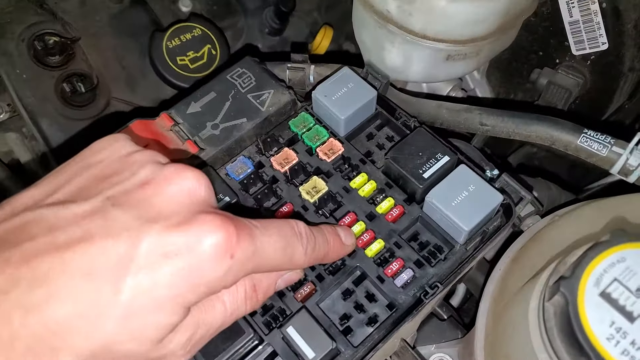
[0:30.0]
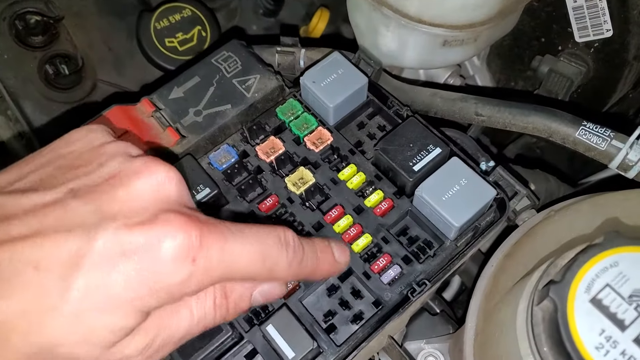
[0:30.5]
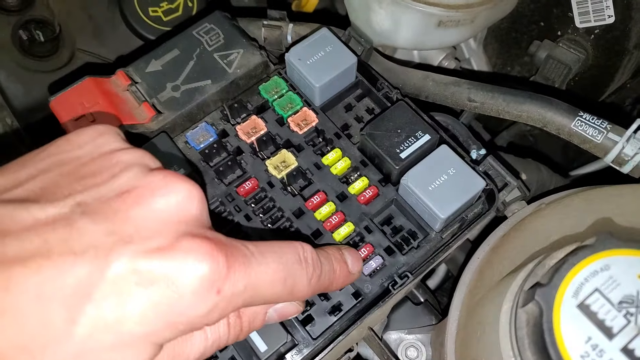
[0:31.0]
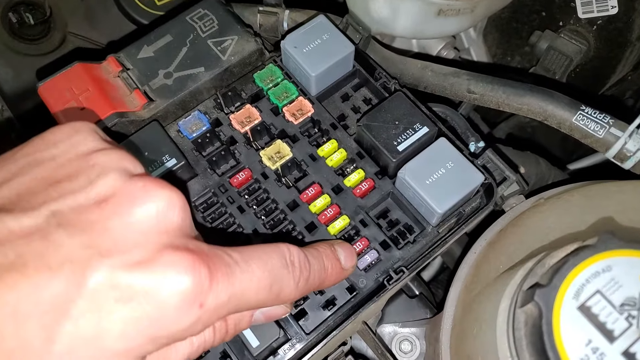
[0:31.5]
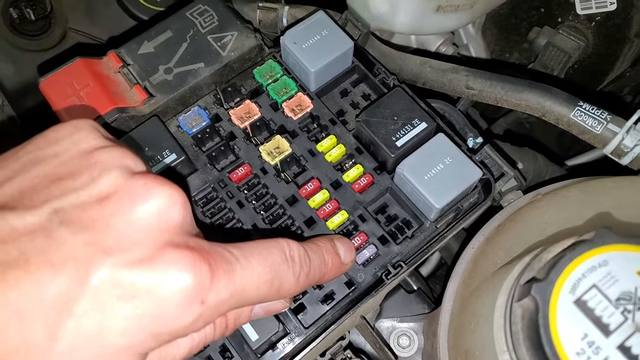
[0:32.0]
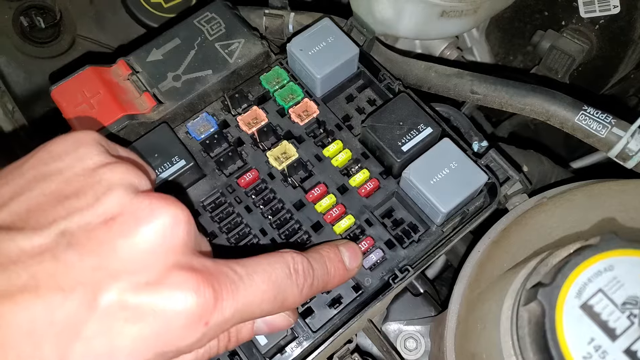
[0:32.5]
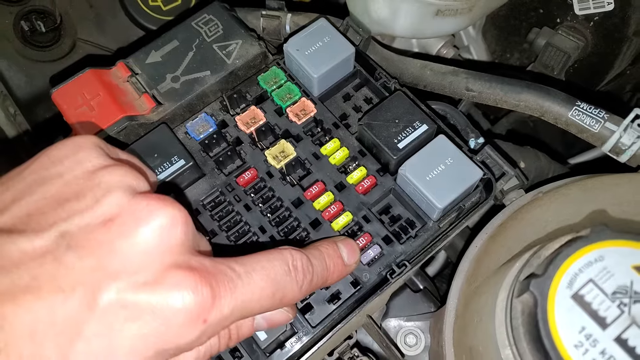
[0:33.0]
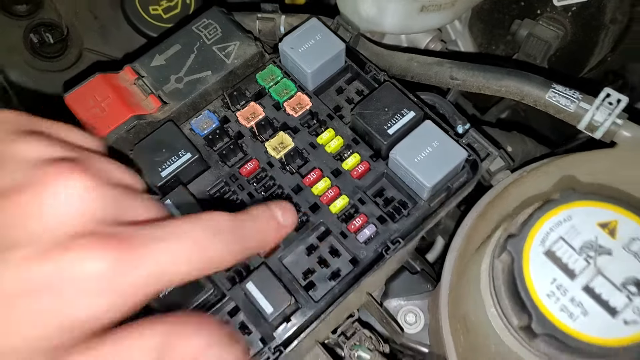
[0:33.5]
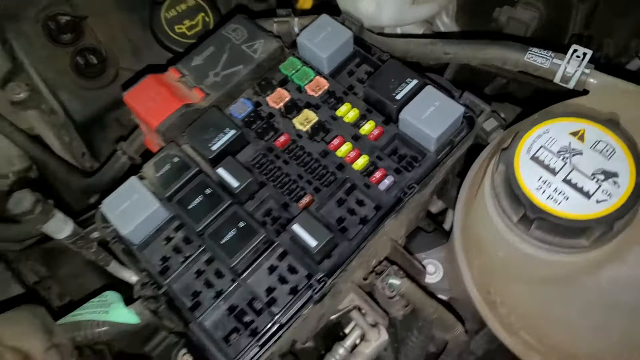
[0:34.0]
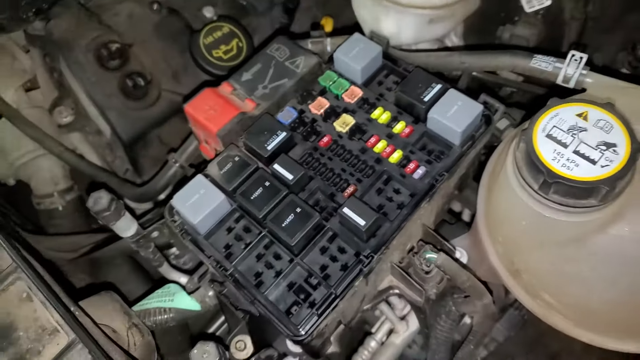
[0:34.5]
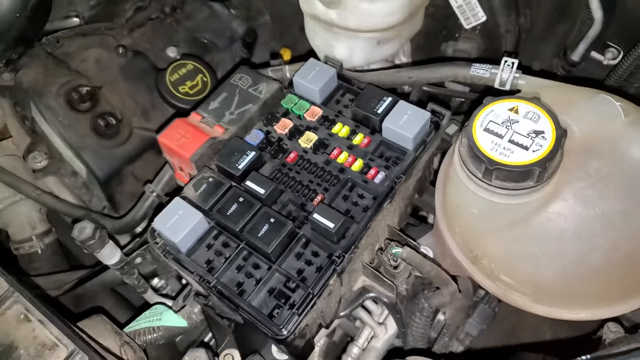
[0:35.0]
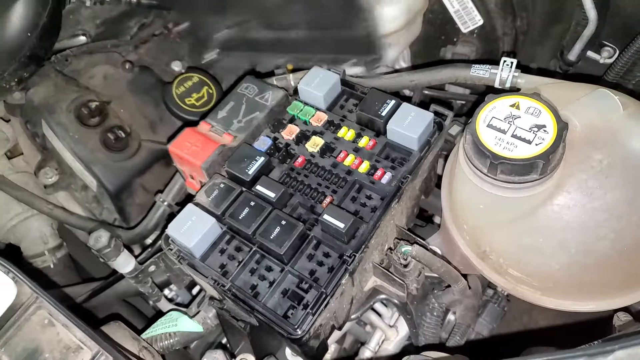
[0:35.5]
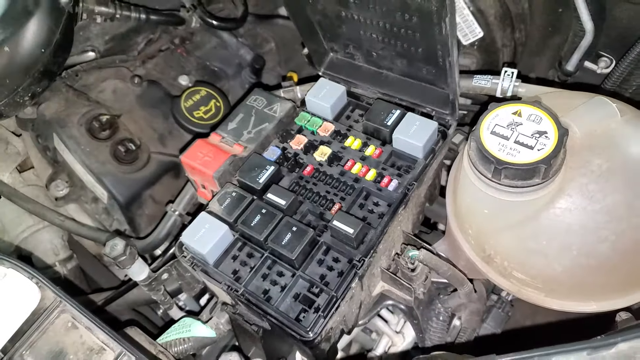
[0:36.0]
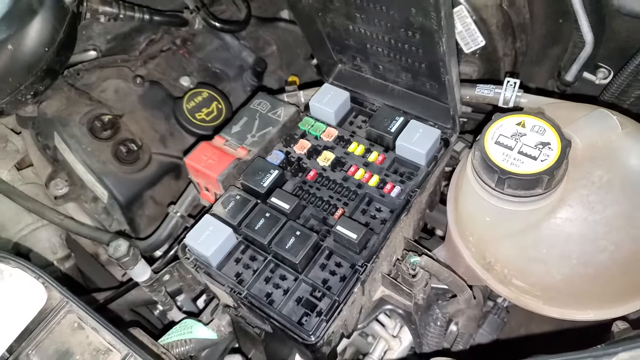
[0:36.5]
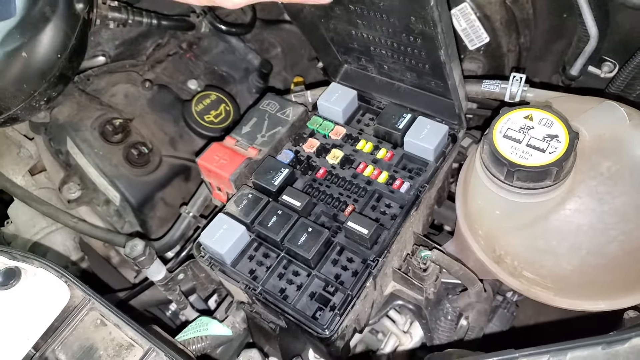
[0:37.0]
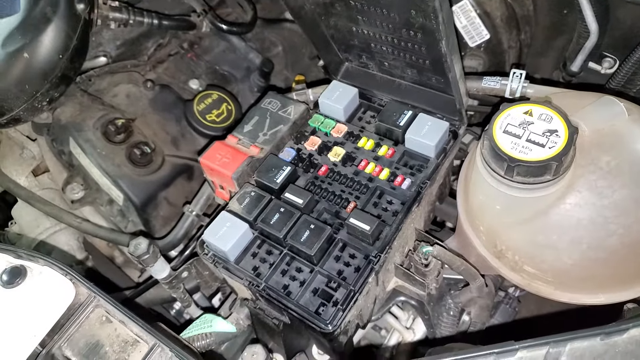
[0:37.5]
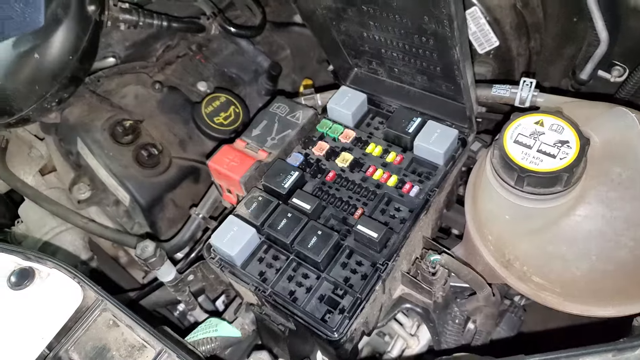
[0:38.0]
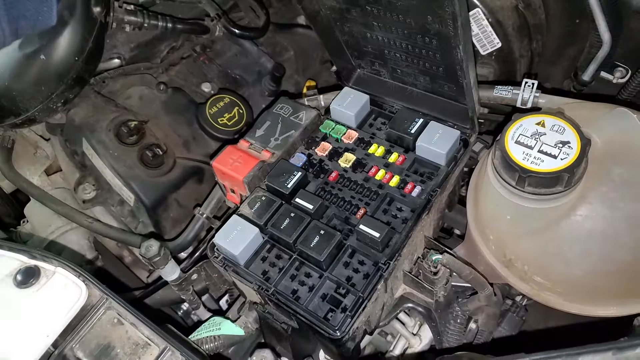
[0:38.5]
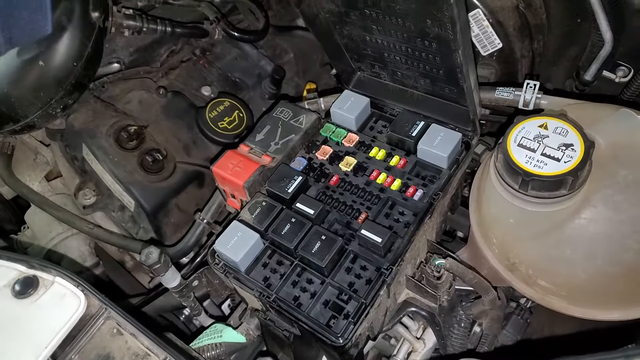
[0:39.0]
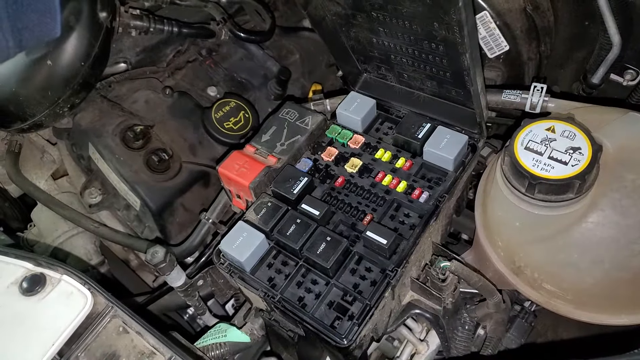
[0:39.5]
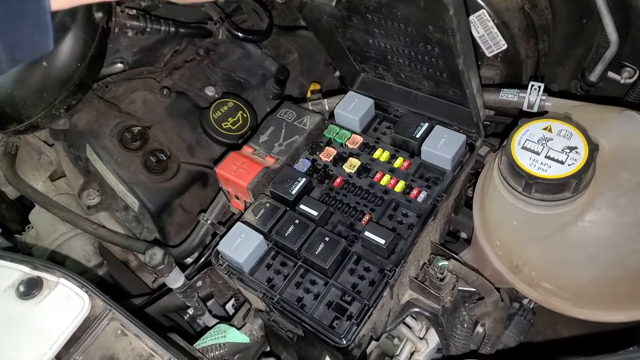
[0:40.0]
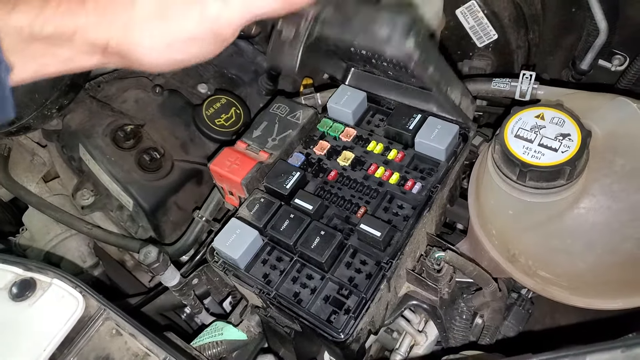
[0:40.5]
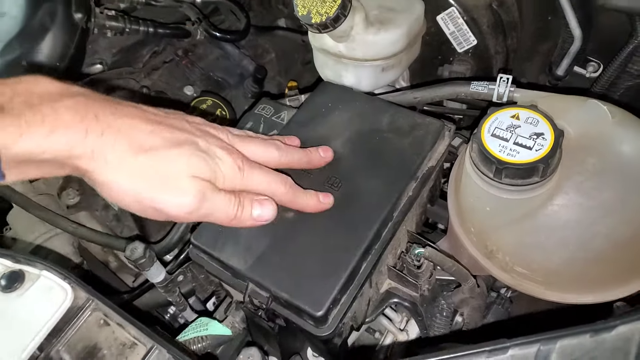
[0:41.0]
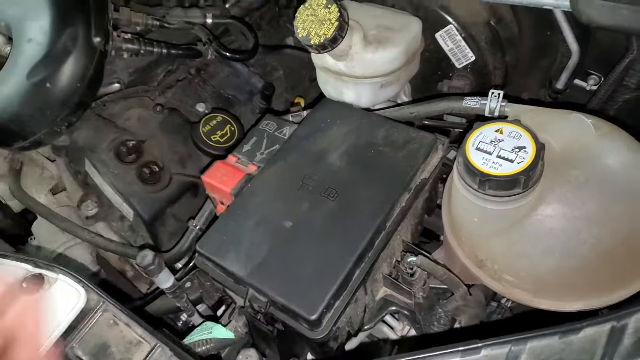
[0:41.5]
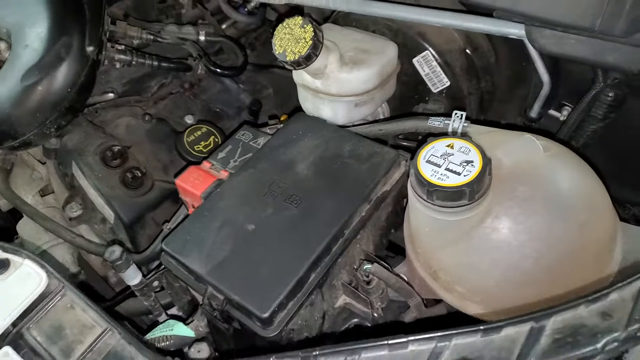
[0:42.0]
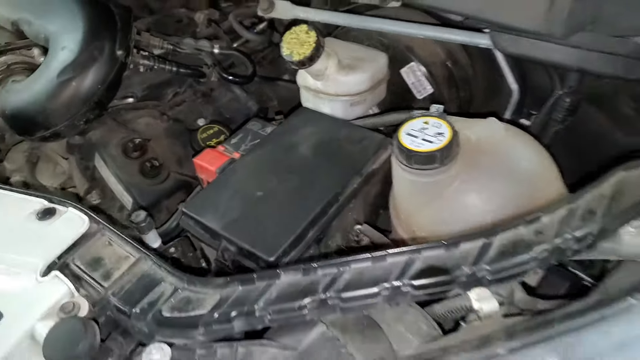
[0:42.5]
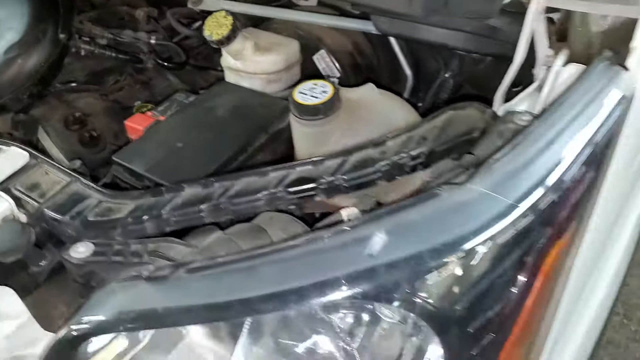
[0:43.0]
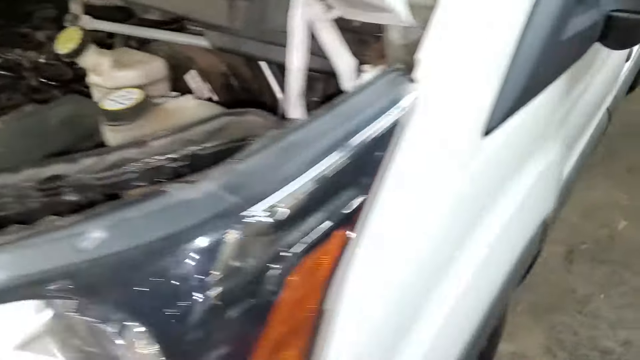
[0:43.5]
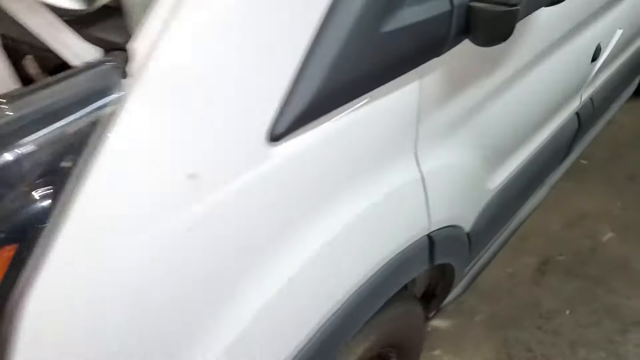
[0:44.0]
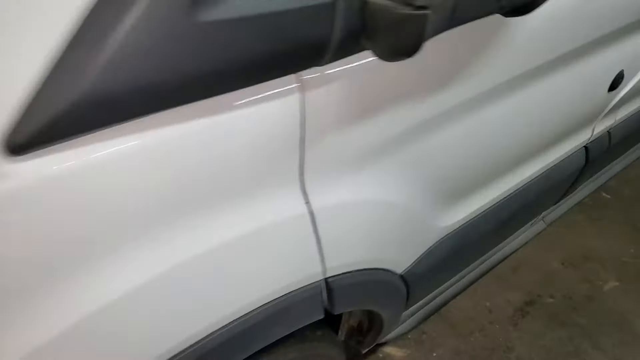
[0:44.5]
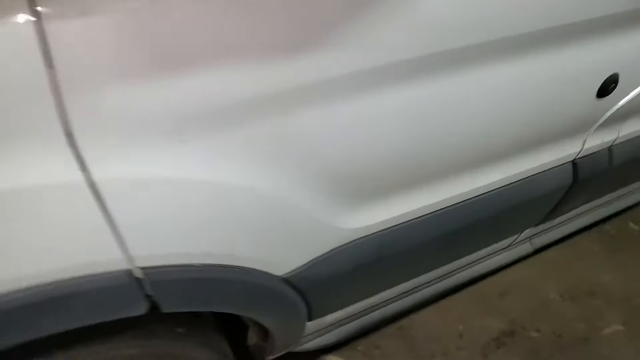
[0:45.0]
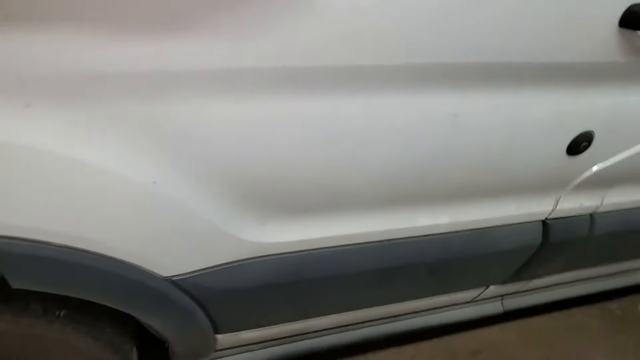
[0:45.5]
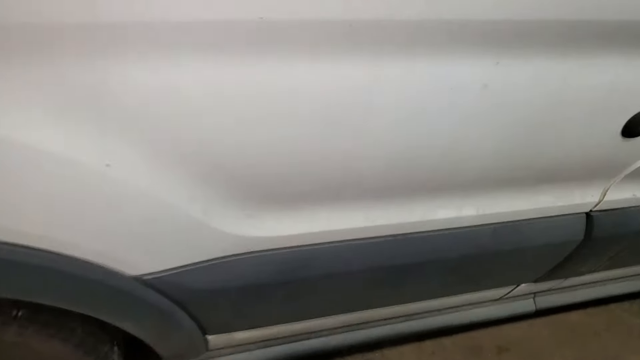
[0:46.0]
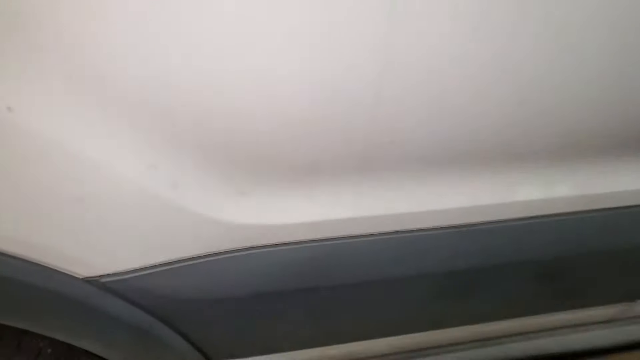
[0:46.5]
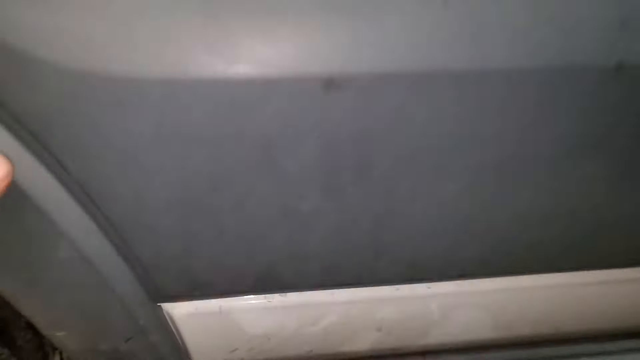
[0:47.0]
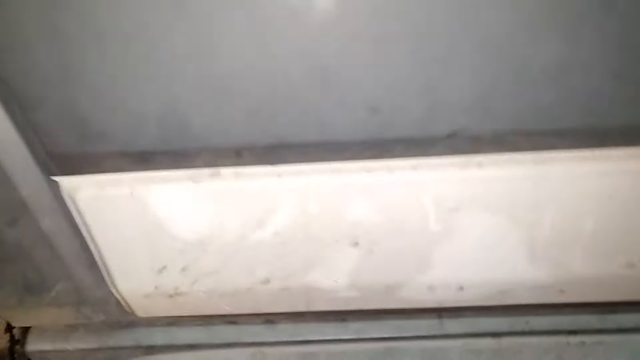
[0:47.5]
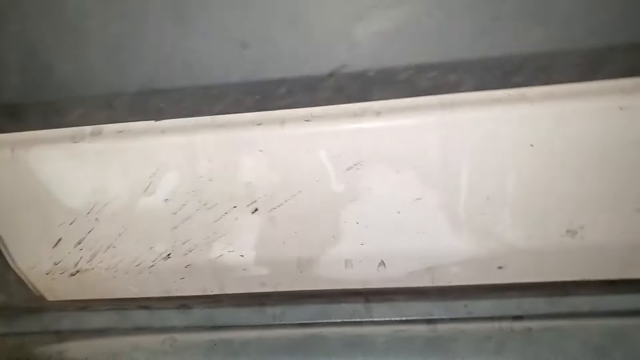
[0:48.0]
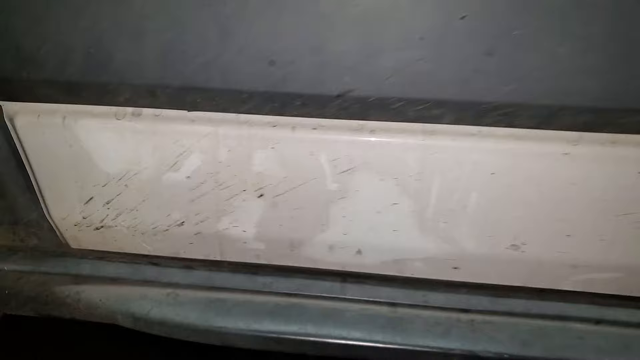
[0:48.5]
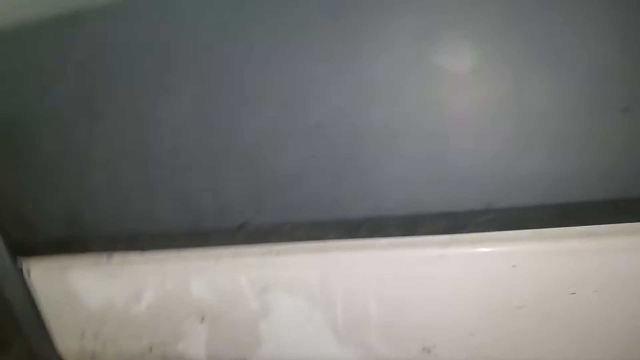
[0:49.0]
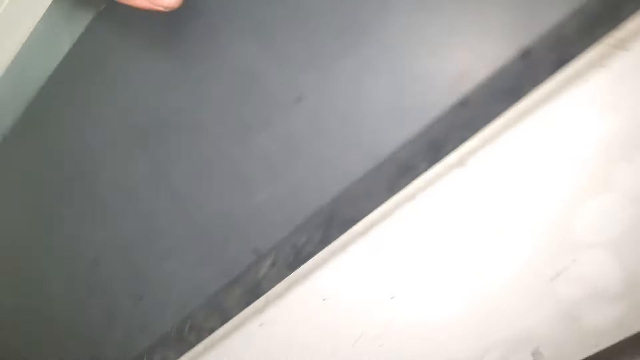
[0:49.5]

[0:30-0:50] A person uses their left index finger to hold down a small red rectangular button with the number 10 in white on top. The button is surrounded by several other colorful buttons as part of the interior vehicle part. After withdrawing their finger, the person takes the black rectangular lid that covers the part and replaces it on top, covering the buttons. As they close the lid, they leave their hands splayed on top of it for a second, then walk around to the right to approach the large white van's driver's side door. As they approach the door, they seem to sink toward the ground to look at the underside of the vehicle. The vehicle is mostly white, with gray trim near the bottom of the driver's side door and the same gray trim around the tire well. Some dirt marks are on the bottom of the van.